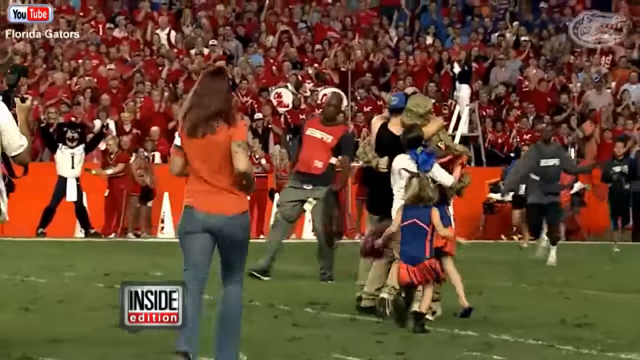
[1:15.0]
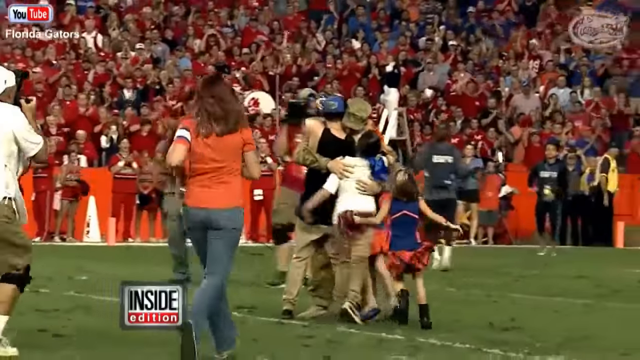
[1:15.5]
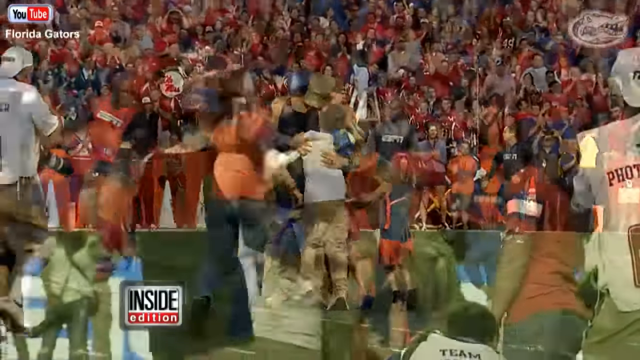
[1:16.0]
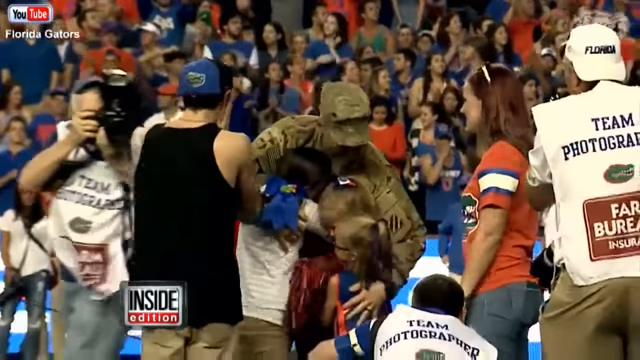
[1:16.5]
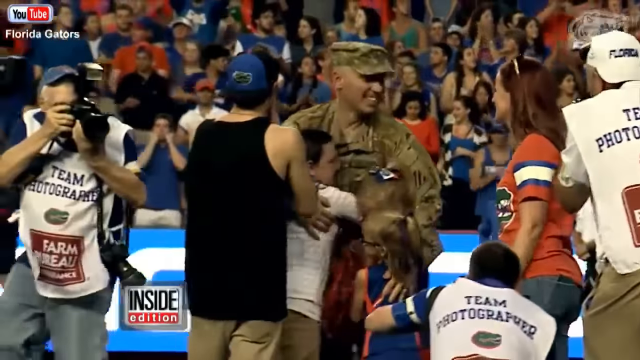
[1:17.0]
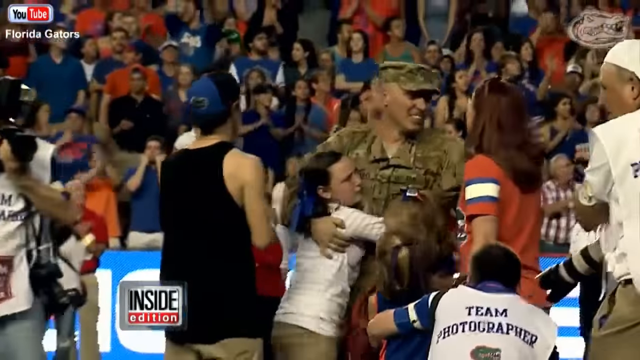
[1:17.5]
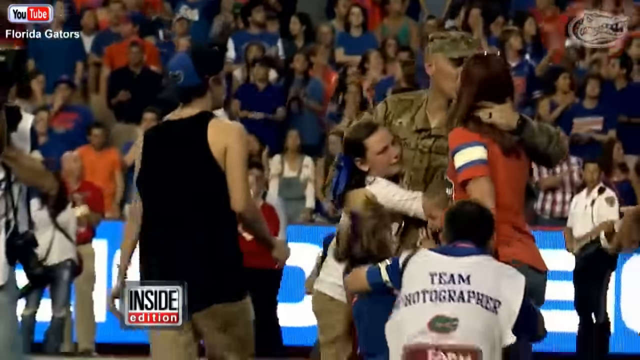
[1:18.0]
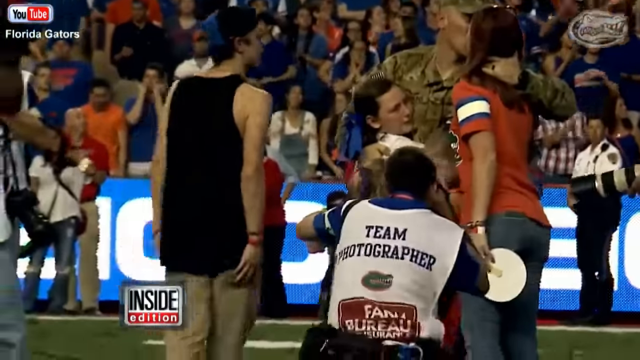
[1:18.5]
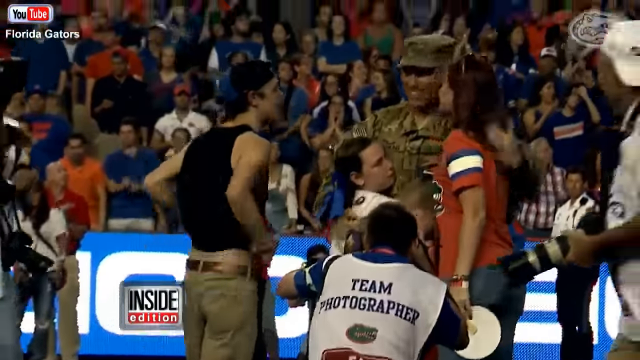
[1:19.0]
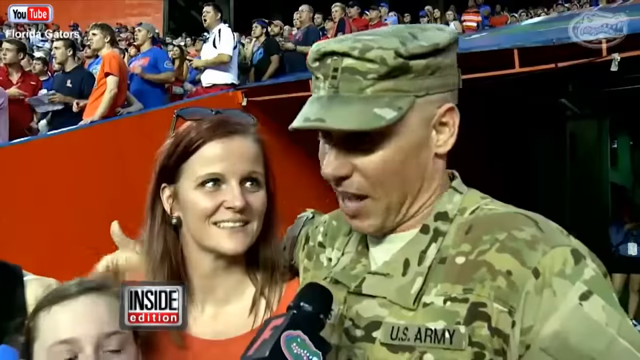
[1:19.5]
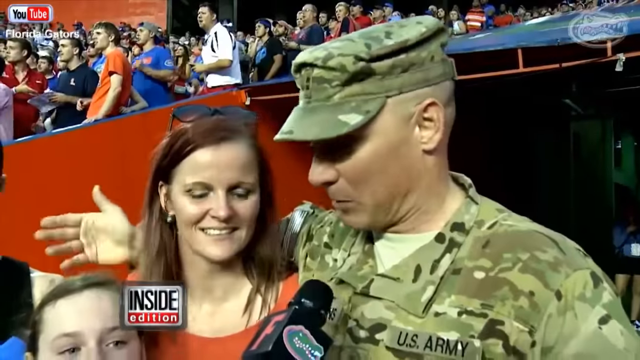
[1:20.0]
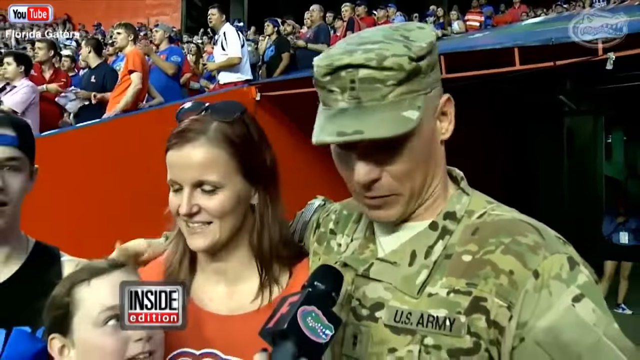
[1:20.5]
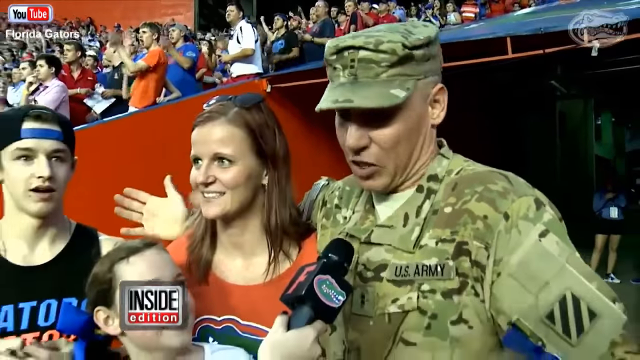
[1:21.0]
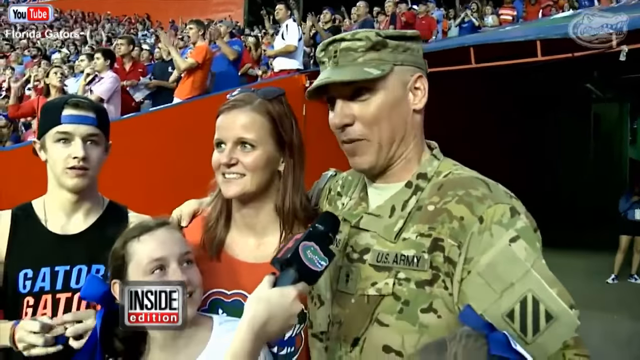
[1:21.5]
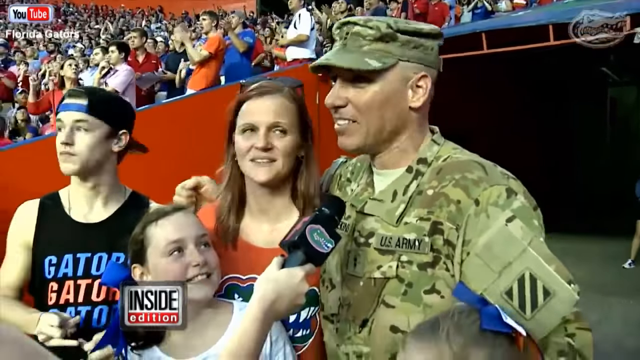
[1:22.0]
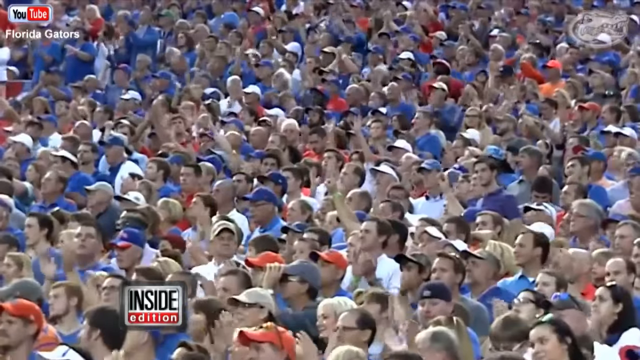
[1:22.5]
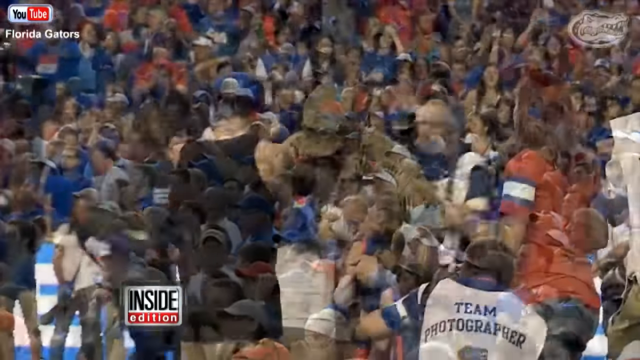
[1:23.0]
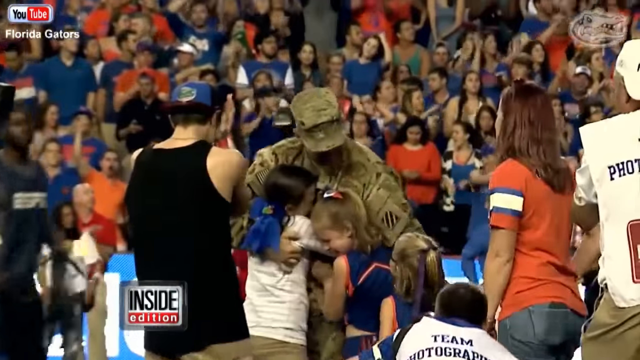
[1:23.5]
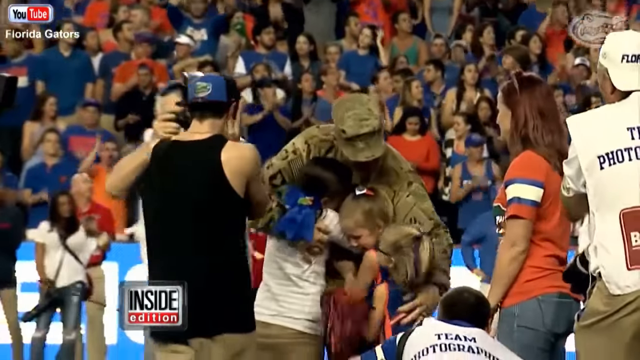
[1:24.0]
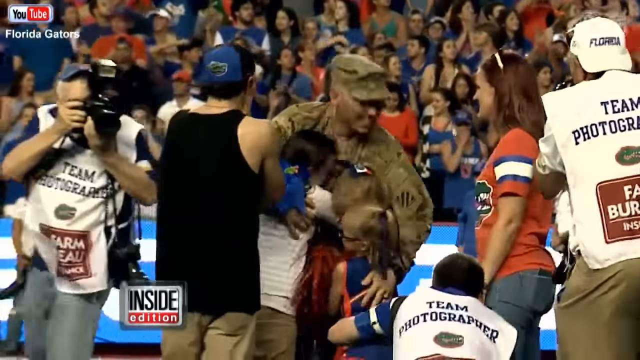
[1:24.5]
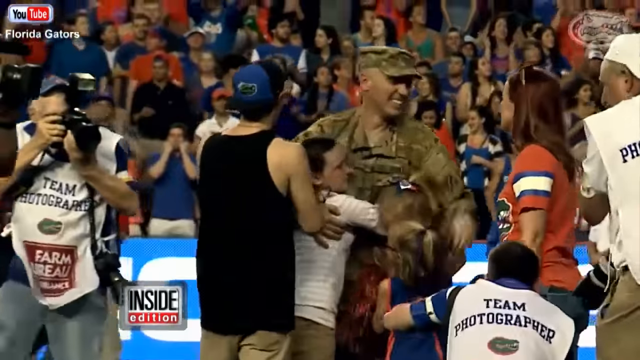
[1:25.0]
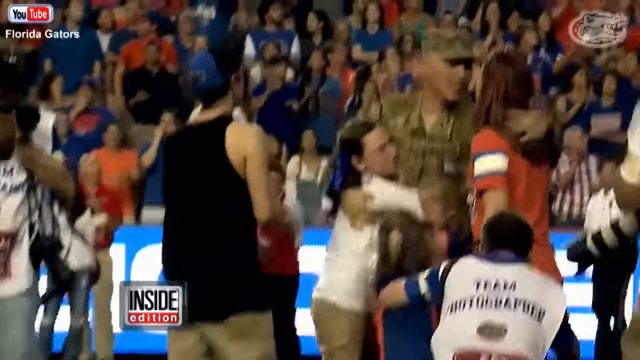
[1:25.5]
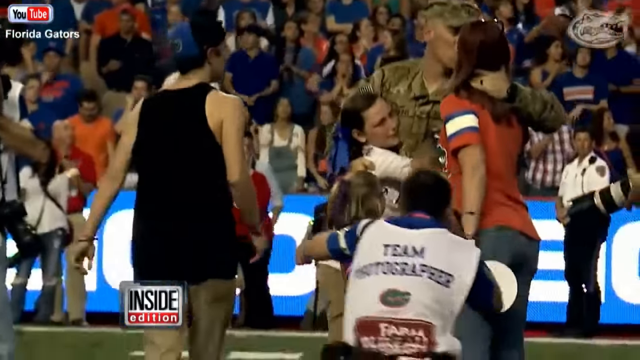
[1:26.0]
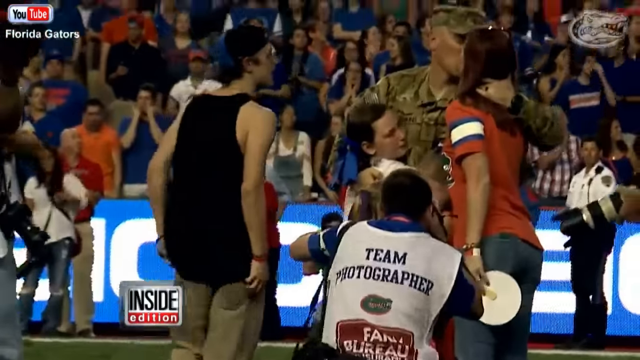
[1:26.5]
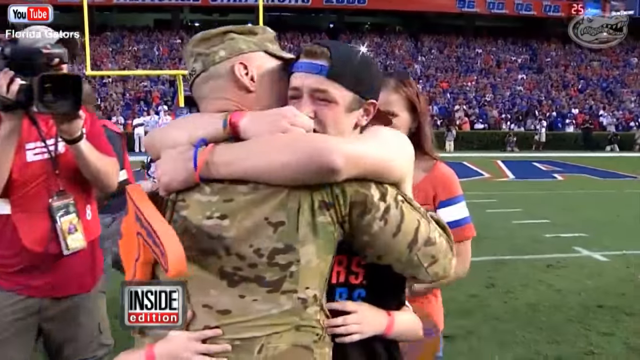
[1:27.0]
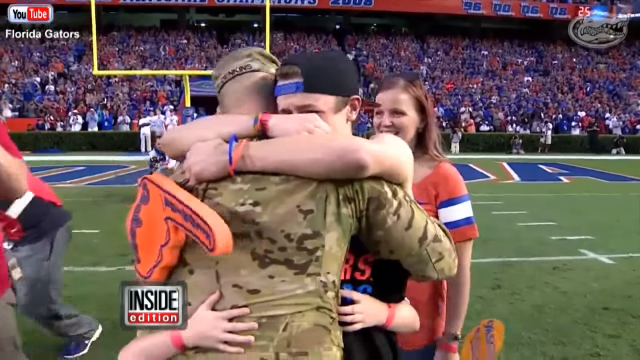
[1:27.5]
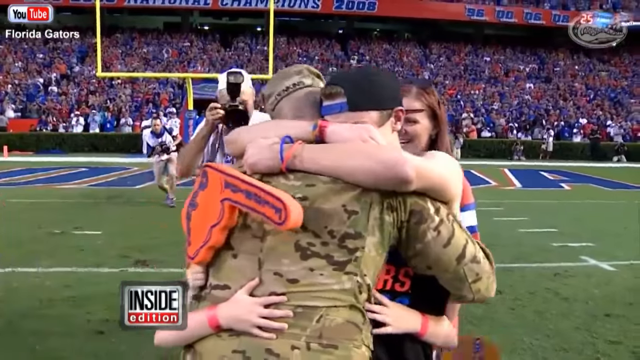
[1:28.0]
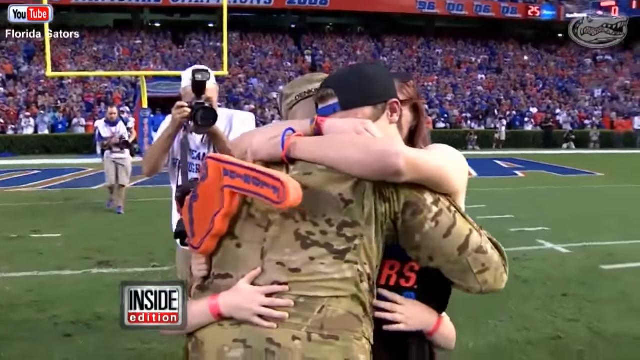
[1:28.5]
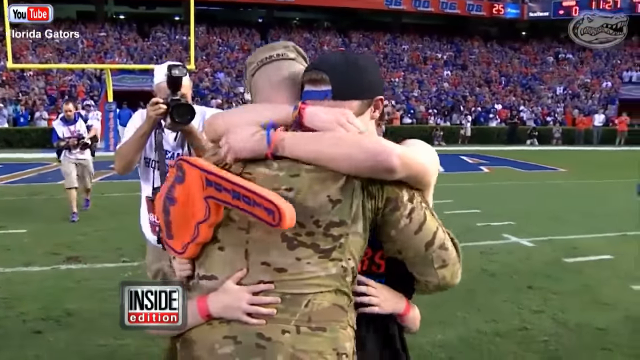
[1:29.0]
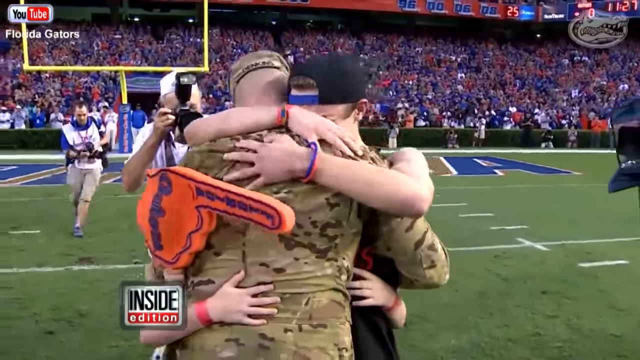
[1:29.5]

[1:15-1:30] The family hug continues, with the dad mainly hugging the daughters and his wife at the start, the wife next to him; he is then shown hugging the son as well. Next, the family is interviewed, with the kids or the husband talking to a reporter, probably about the reunion. Another shot shows the crowd cheering for the moment.